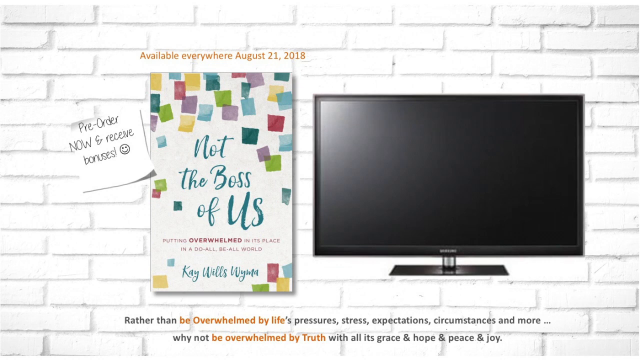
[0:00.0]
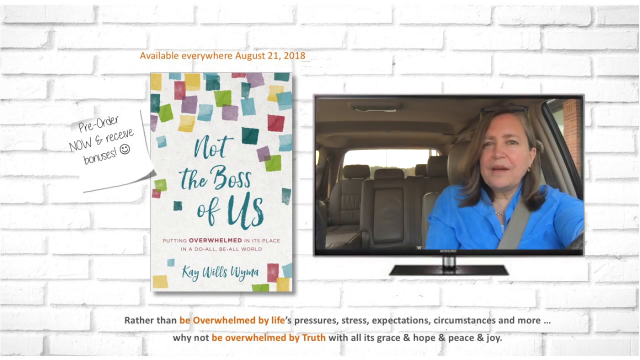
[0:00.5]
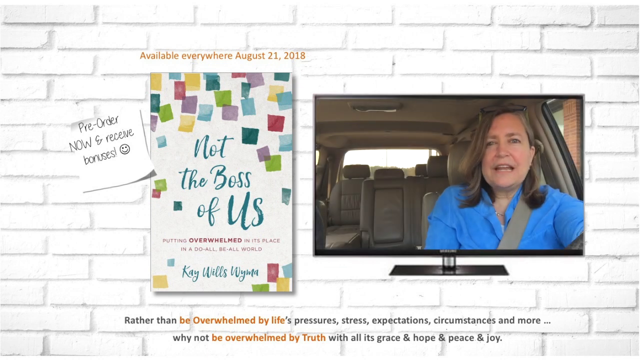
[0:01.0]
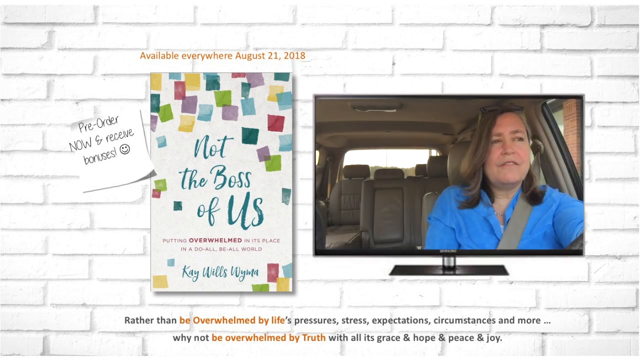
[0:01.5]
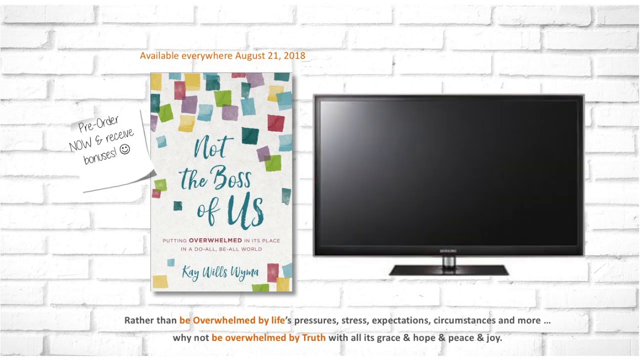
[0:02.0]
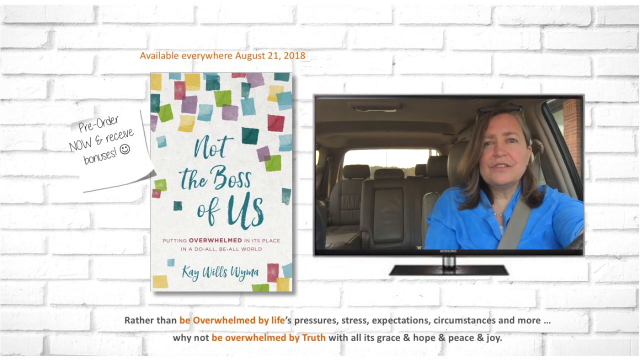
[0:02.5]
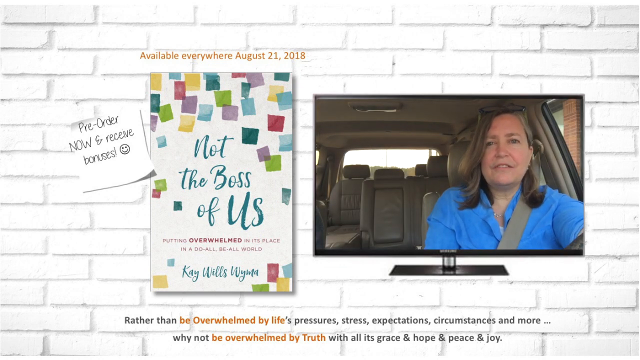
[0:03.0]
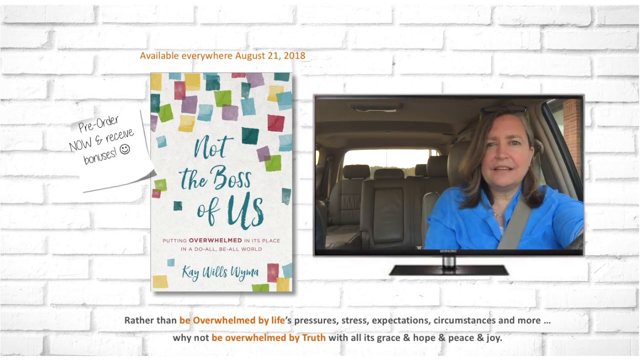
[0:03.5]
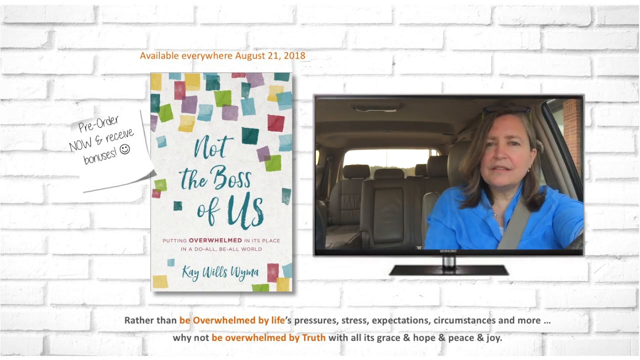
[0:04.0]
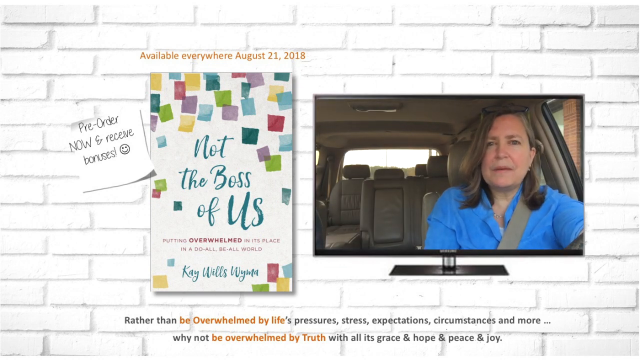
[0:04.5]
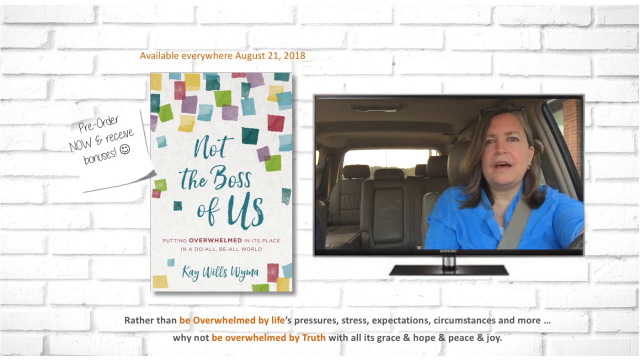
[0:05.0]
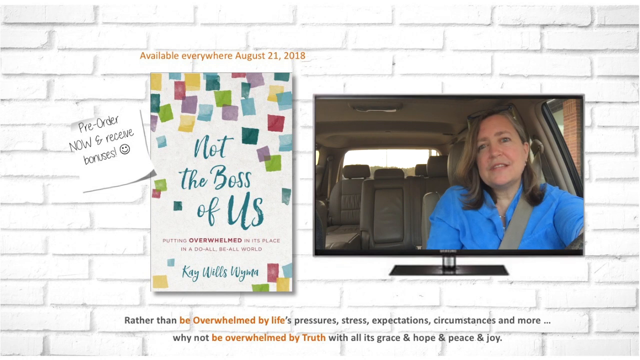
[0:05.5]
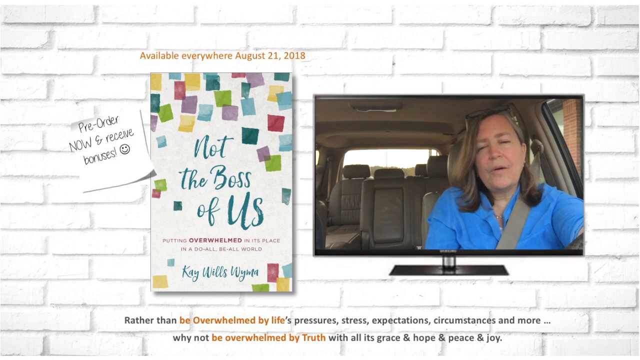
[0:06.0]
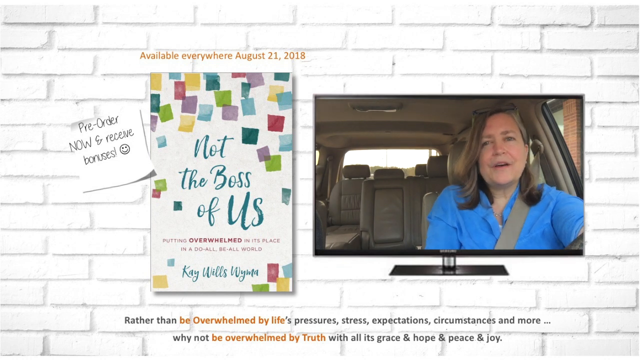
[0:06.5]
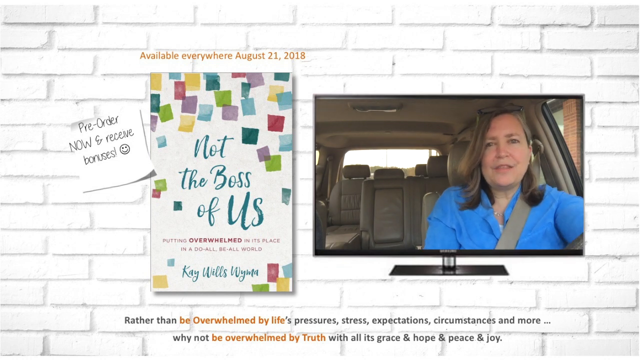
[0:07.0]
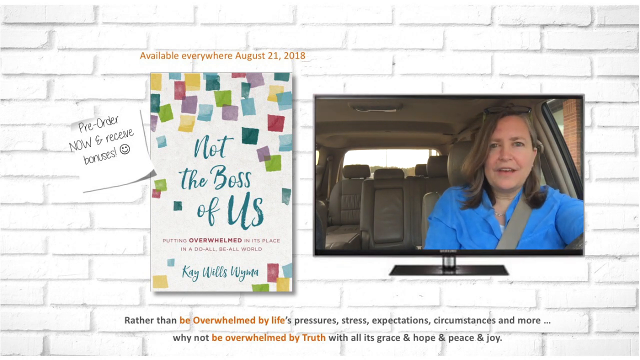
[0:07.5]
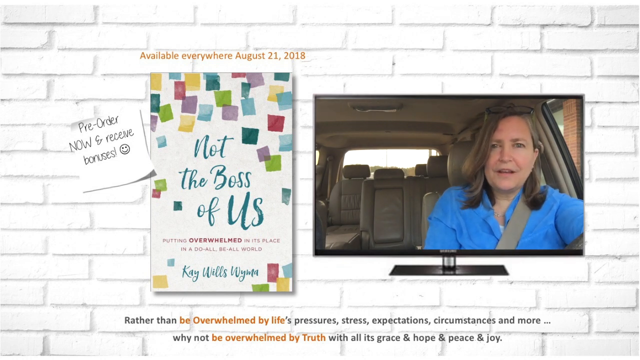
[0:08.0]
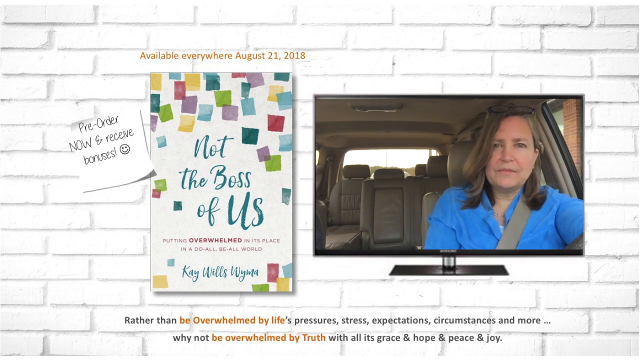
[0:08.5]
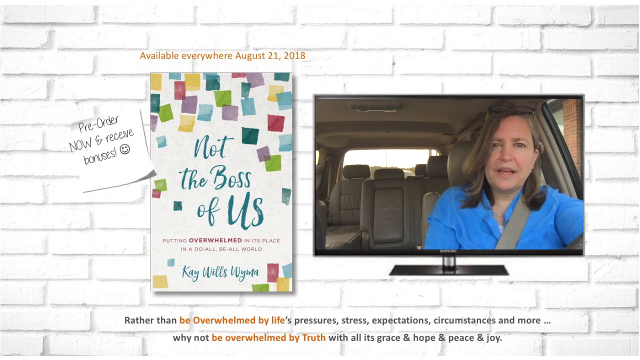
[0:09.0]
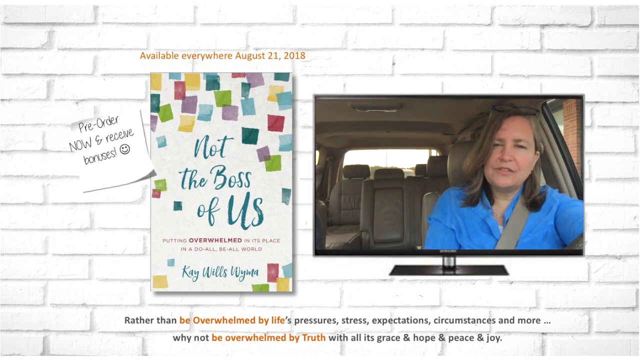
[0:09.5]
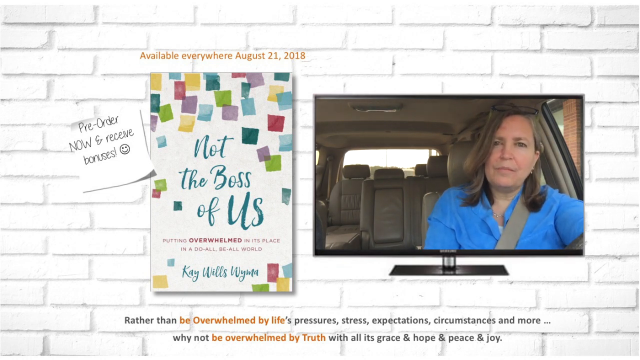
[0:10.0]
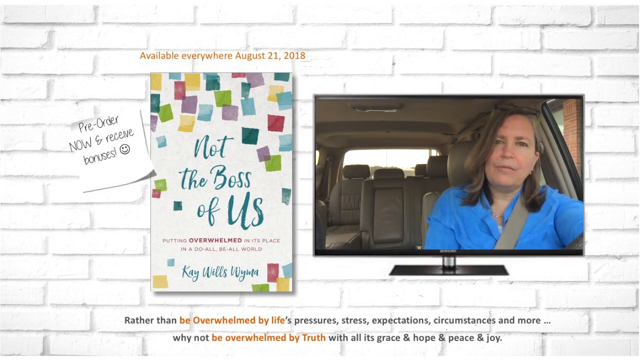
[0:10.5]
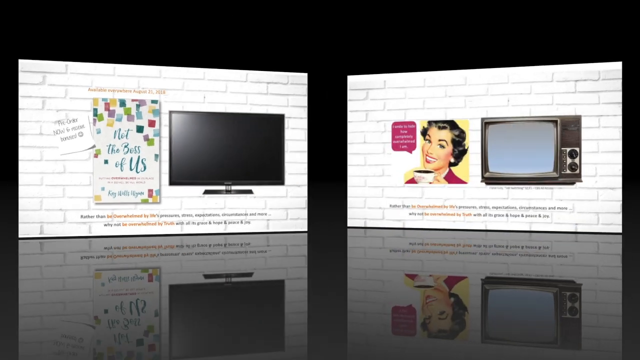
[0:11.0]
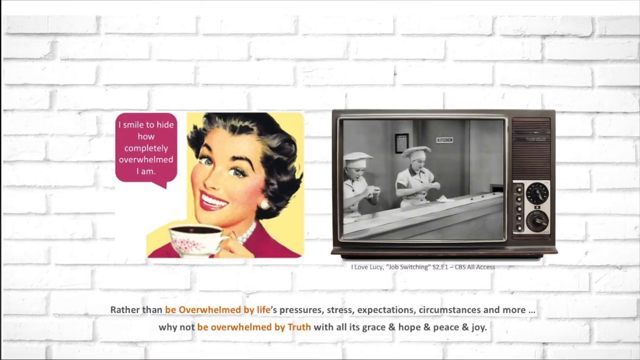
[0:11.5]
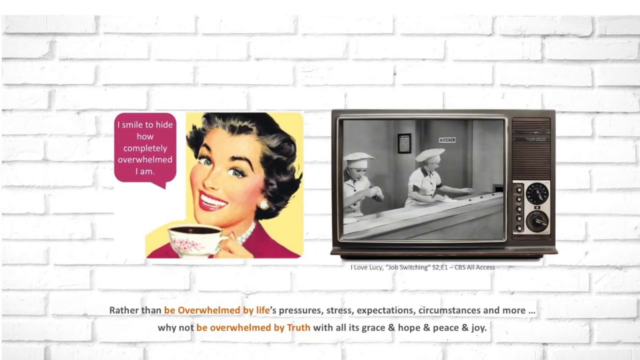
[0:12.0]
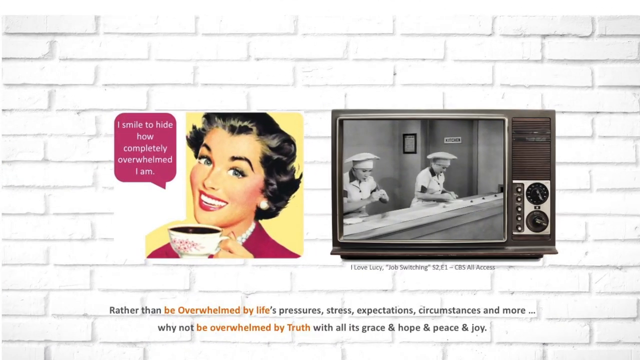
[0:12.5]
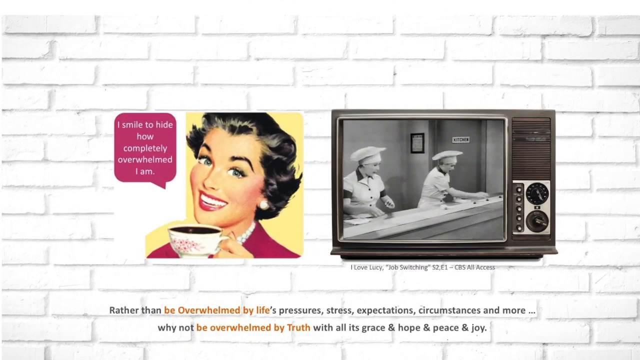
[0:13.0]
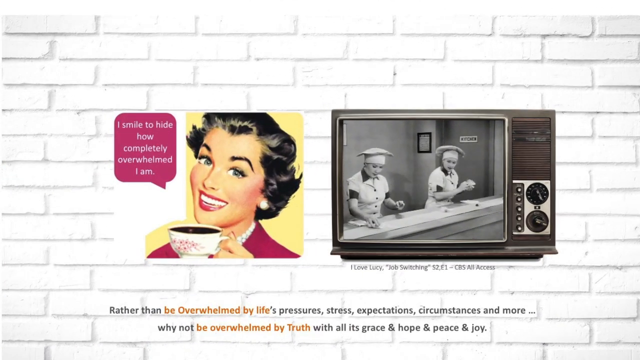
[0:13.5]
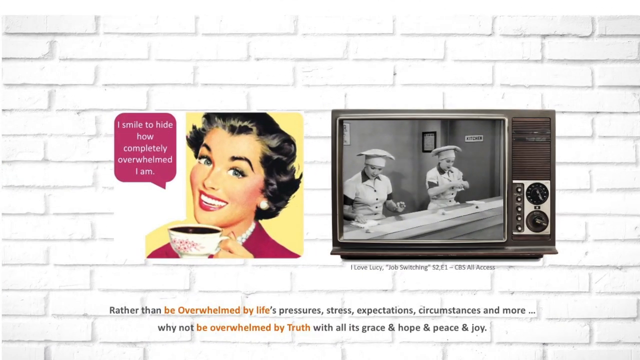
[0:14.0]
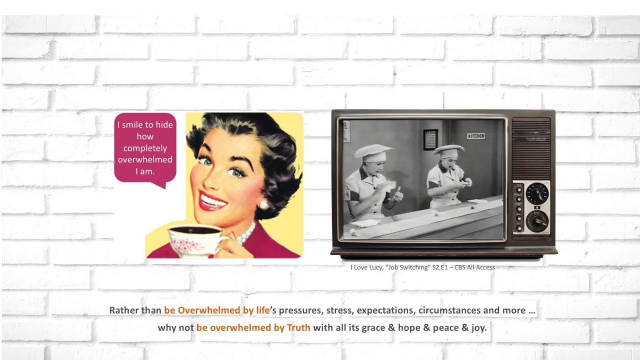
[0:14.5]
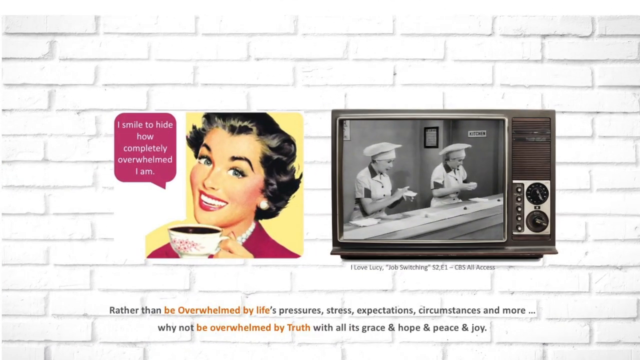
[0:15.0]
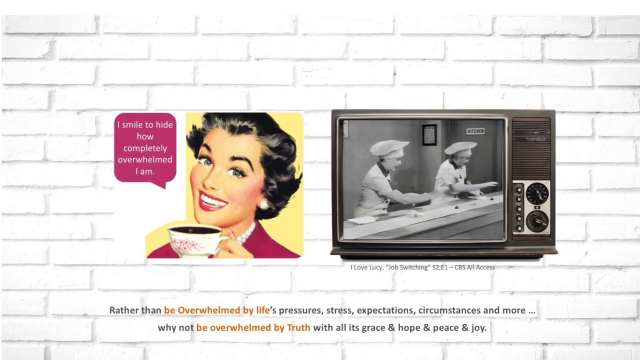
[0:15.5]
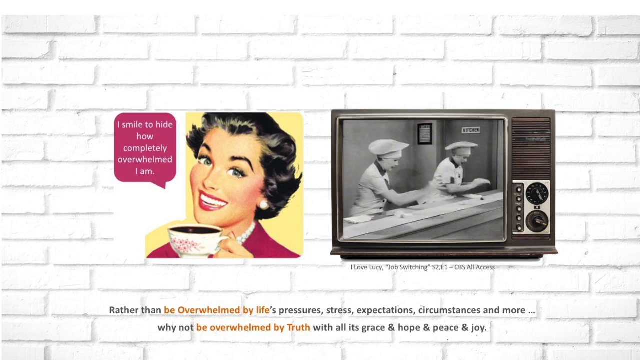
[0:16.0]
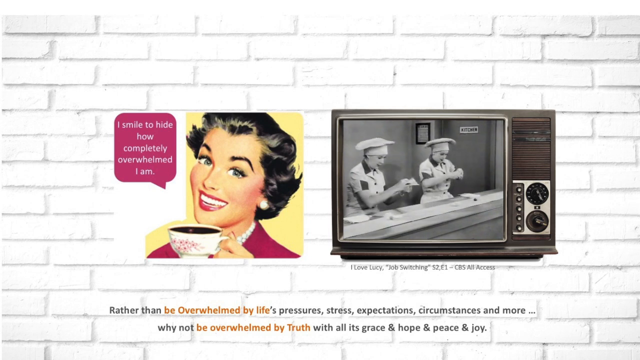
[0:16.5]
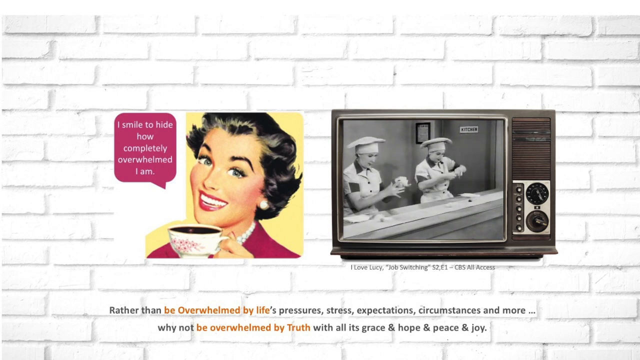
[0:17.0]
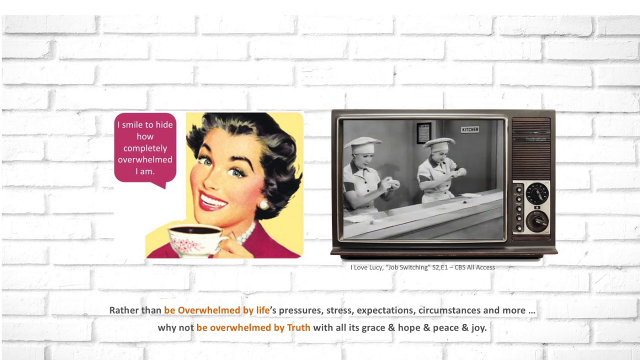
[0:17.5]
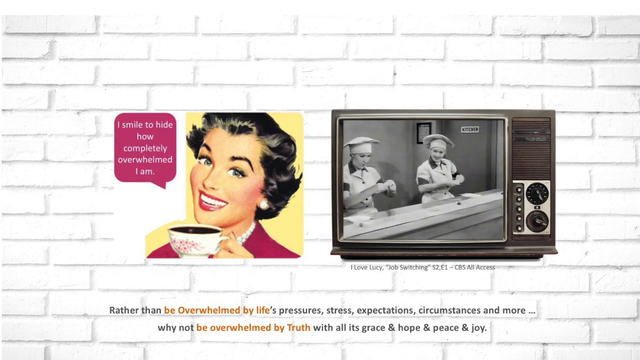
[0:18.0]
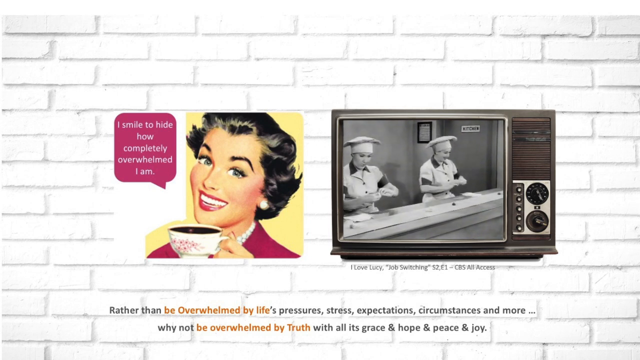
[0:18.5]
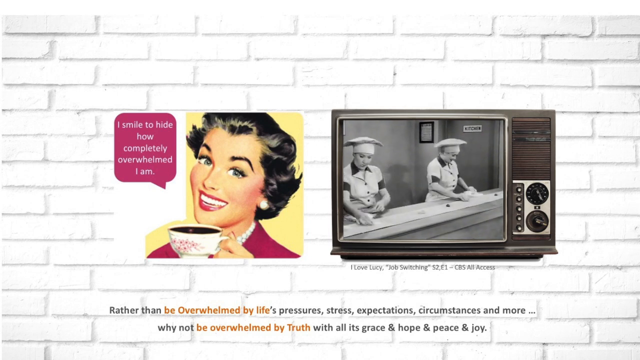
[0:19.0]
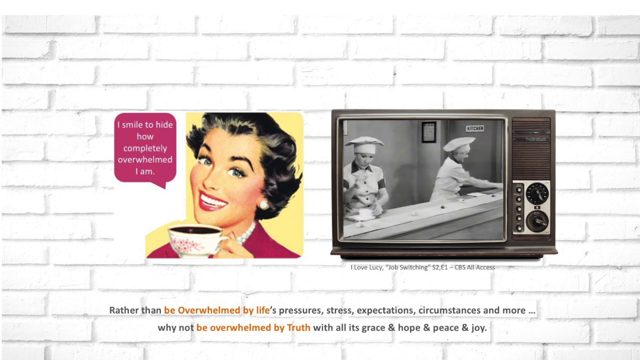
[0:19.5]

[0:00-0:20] A woman sits inside a car, looking directly at the camera as if she is speaking to the viewer. Next to her is an ad for a book called "Not the Boss of Us" by Kay Wills Wima, with a note saying it is available starting August 21st 2018. The video seems to focus on stress and feeling overwhelmed. The scene then changes: the woman in the car disappears and two images appear side by side. On one side is a retro-style drawing of a smiling woman with a caption beginning "I smile to hide", a humorous image about hiding how overwhelmed one feels. On the other side is an old black-and-white TV playing a scene of two women in factory uniforms who look like they are struggling to keep up with a fast-moving conveyor belt.